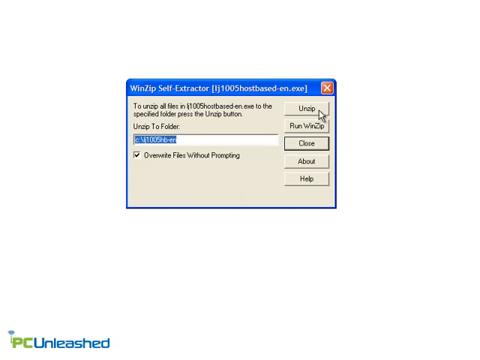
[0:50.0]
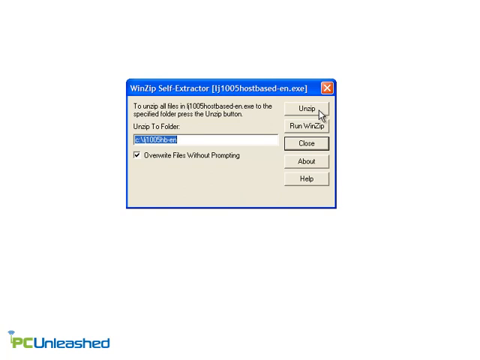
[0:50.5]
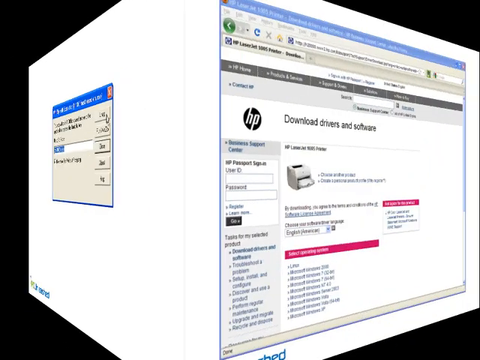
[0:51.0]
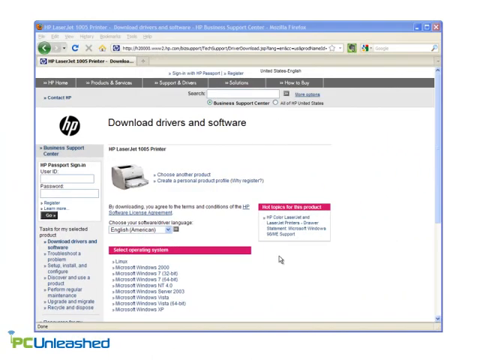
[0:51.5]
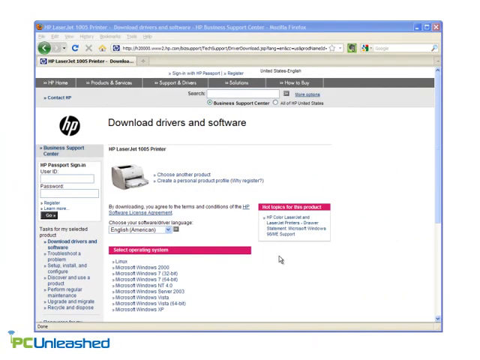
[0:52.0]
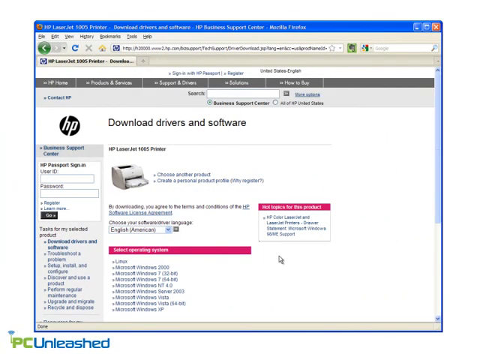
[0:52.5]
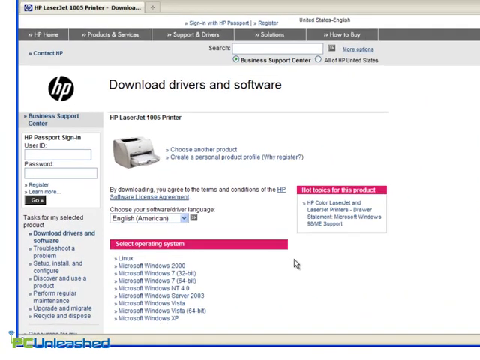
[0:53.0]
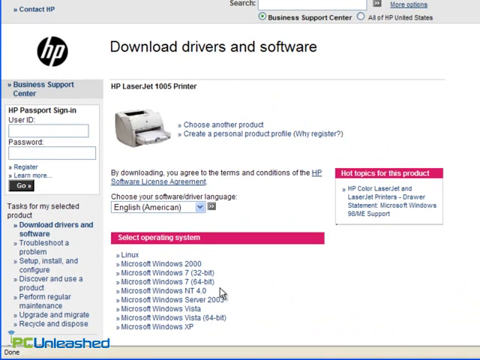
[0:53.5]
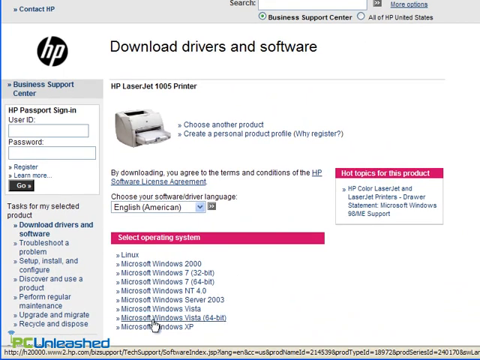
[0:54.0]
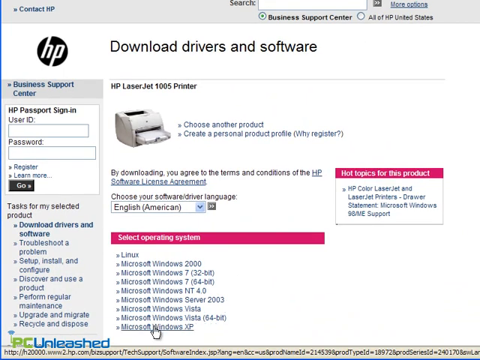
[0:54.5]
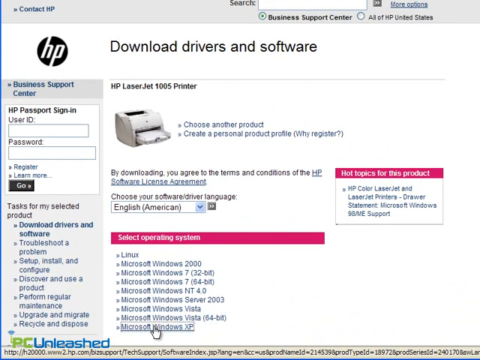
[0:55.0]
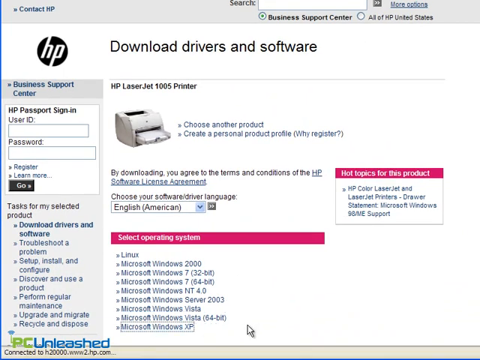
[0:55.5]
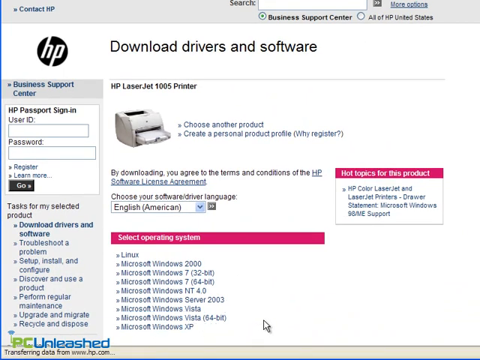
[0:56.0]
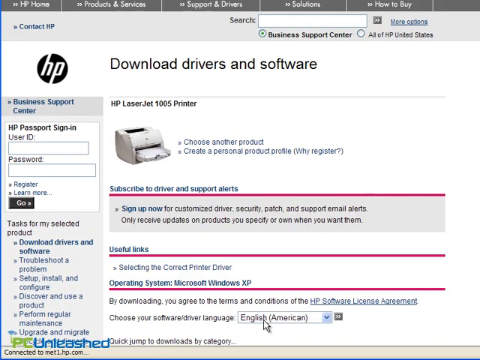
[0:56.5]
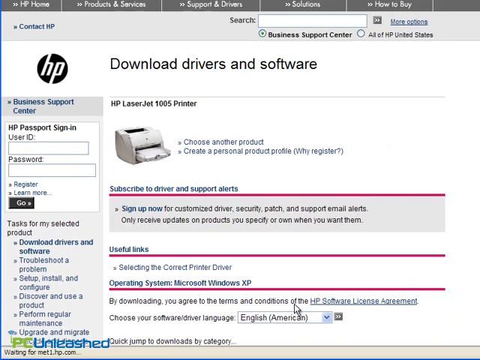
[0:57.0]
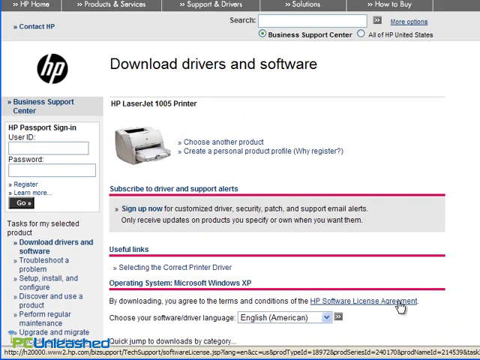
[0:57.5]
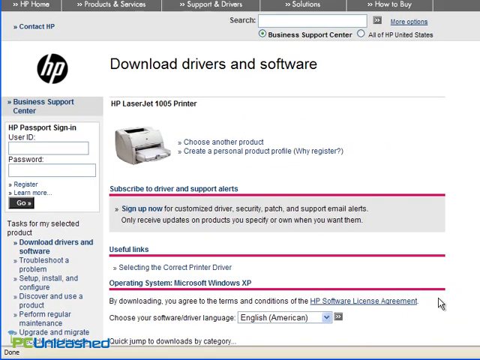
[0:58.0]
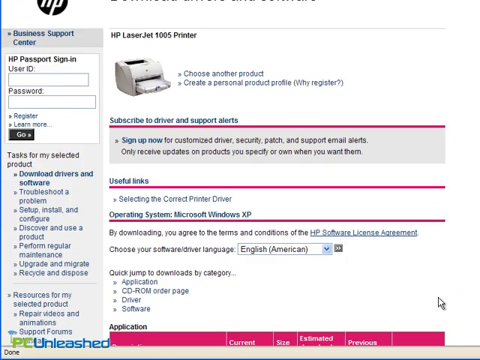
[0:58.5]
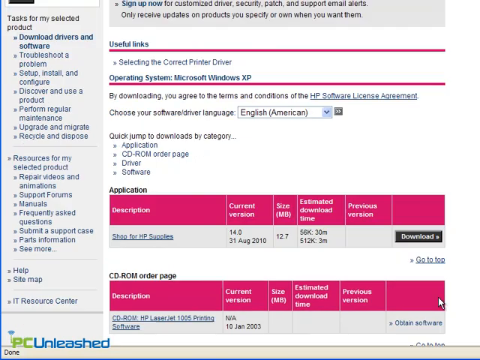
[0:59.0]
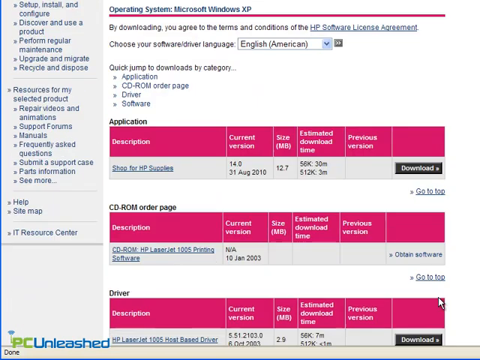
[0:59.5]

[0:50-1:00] The file is unzipped by clicking the unzip button, extracting to the folder shown in the bar below. A browser then opens to the HP site, where the Microsoft Windows XP driver is selected and download is clicked. The HP software license agreement page appears and redirects to the site. The HP site also lists drivers for other systems, such as Linux, Microsoft Windows 2000, Microsoft Windows 7 in 64-bit and 32-bit versions, Microsoft Windows NT4, Server 2003, Microsoft Vista and others. There are also options to sign in with a user ID and password and to contact HP.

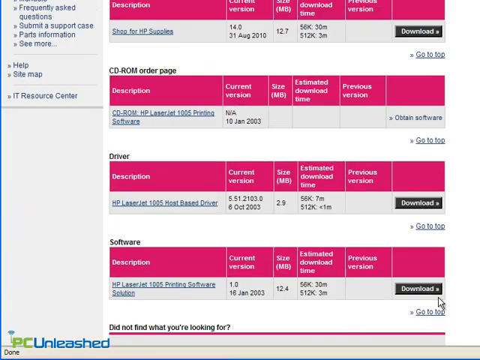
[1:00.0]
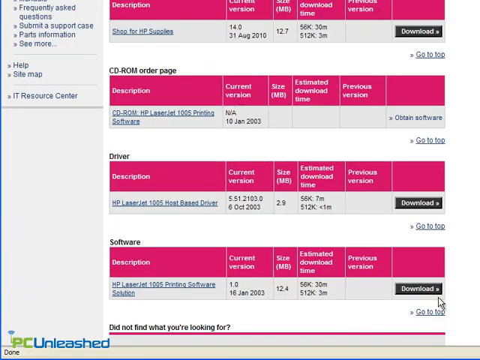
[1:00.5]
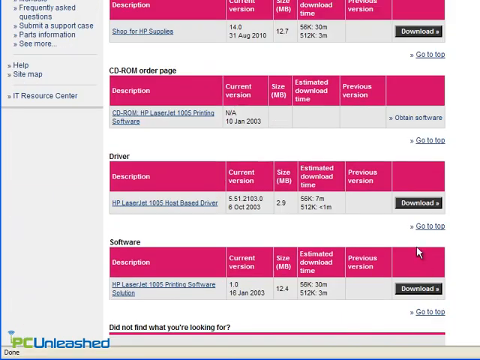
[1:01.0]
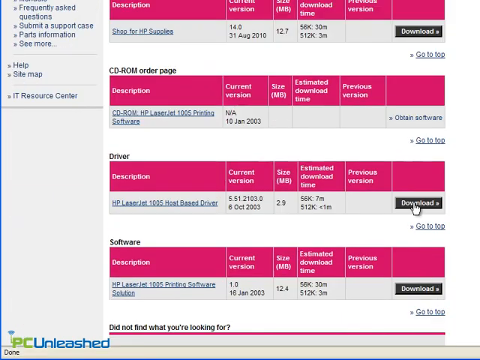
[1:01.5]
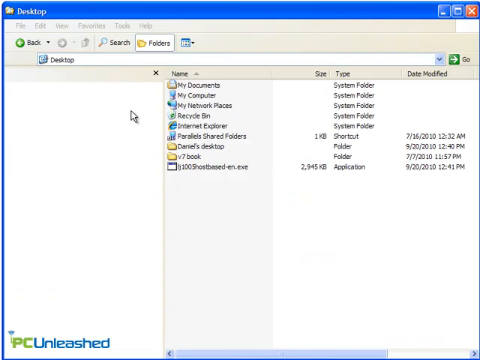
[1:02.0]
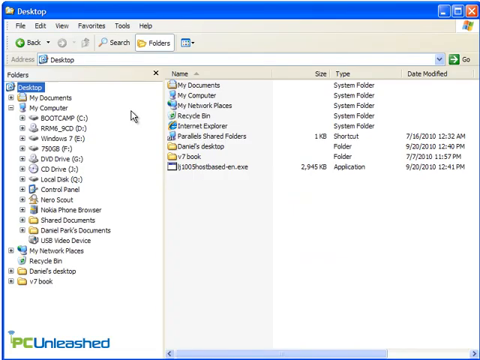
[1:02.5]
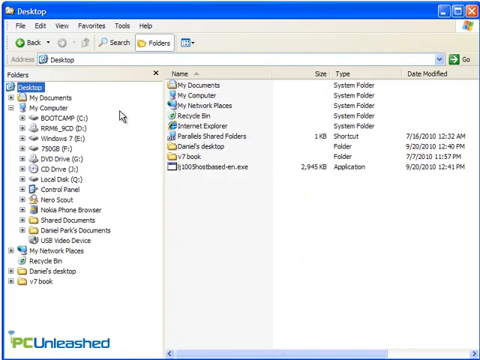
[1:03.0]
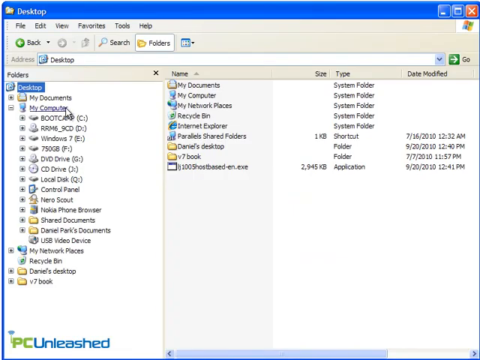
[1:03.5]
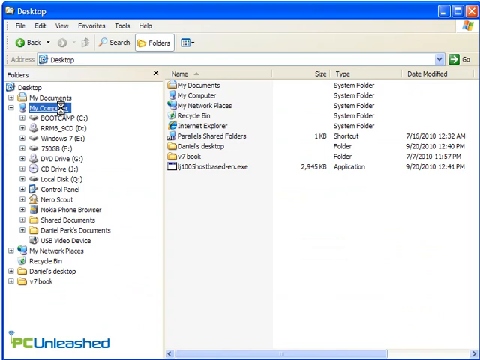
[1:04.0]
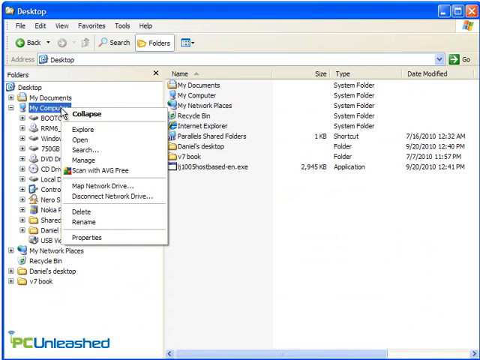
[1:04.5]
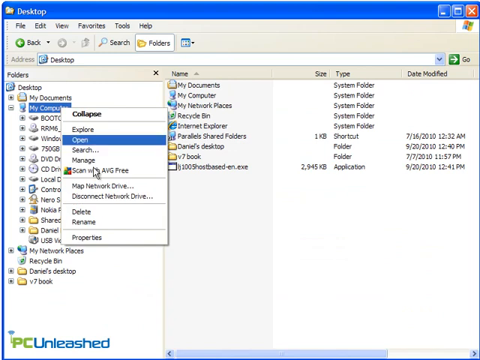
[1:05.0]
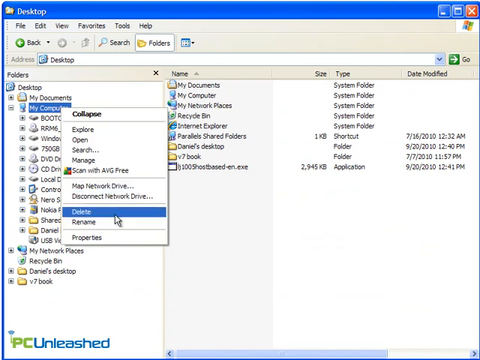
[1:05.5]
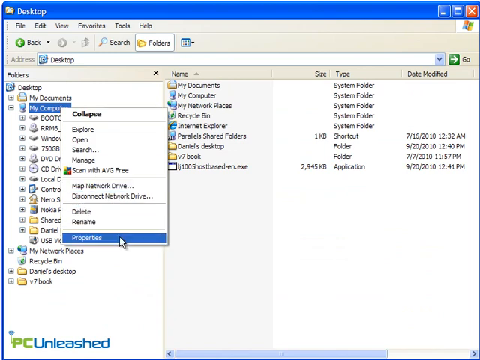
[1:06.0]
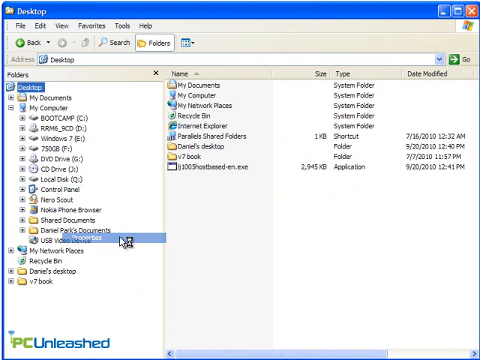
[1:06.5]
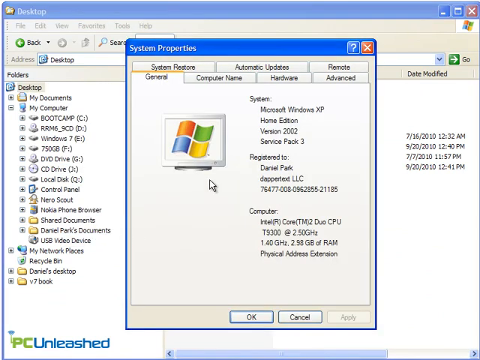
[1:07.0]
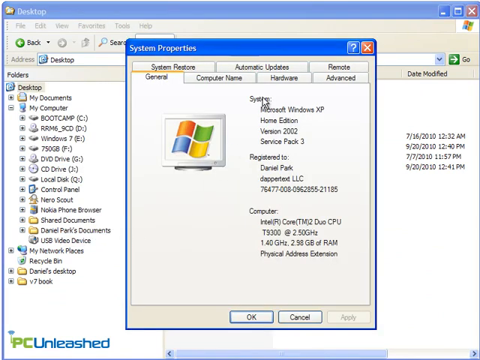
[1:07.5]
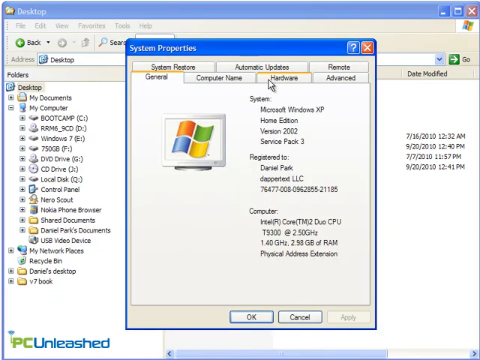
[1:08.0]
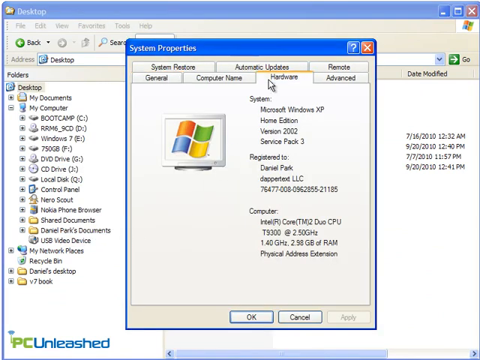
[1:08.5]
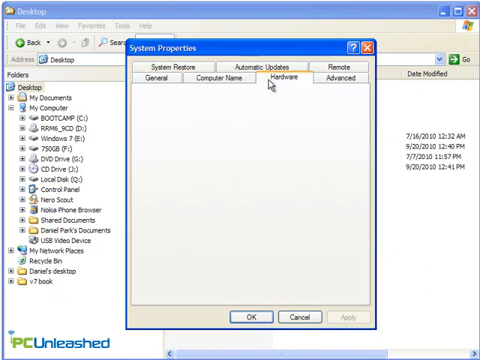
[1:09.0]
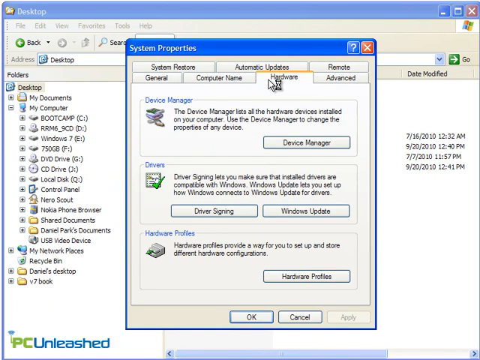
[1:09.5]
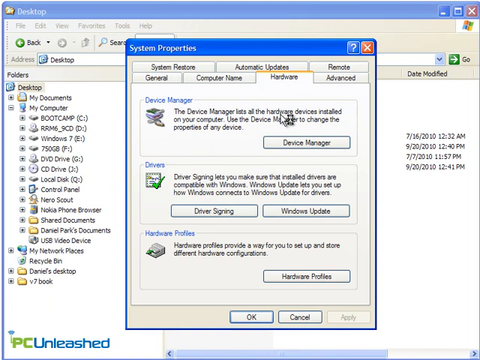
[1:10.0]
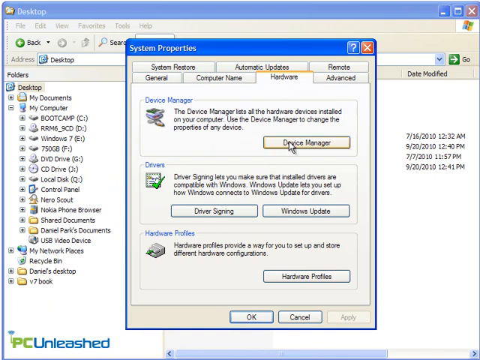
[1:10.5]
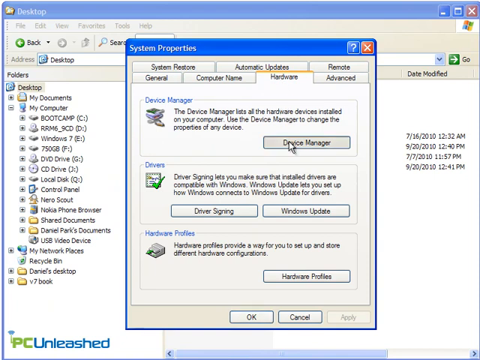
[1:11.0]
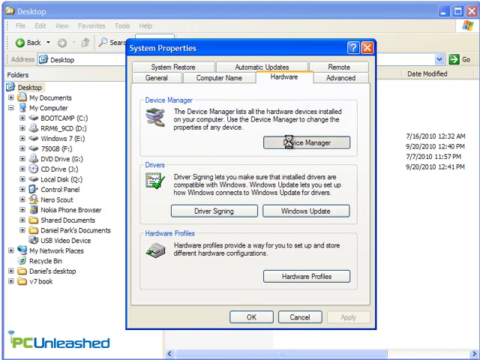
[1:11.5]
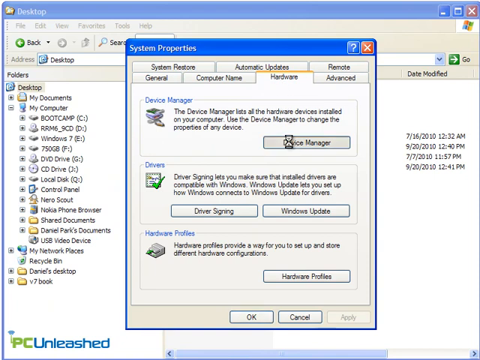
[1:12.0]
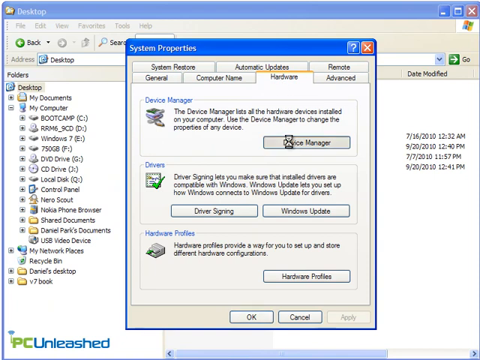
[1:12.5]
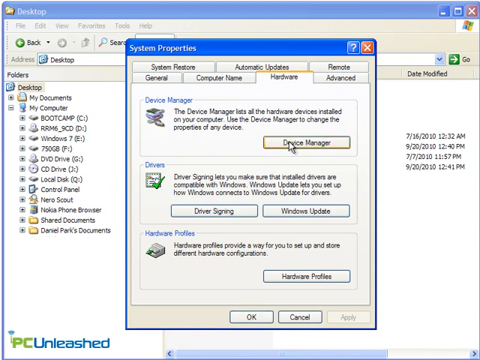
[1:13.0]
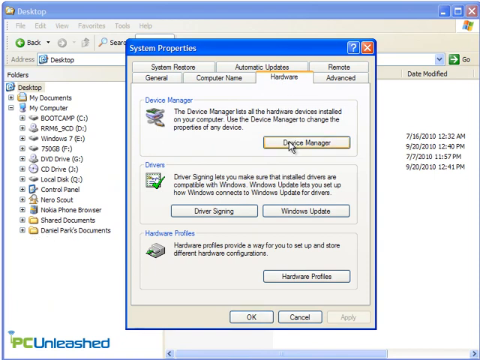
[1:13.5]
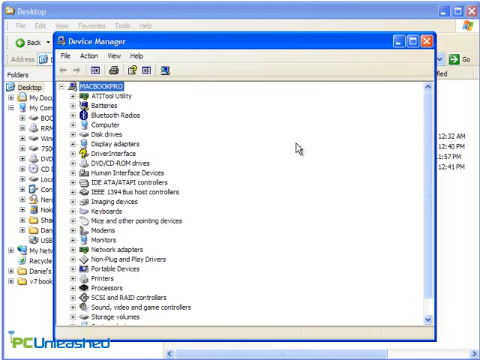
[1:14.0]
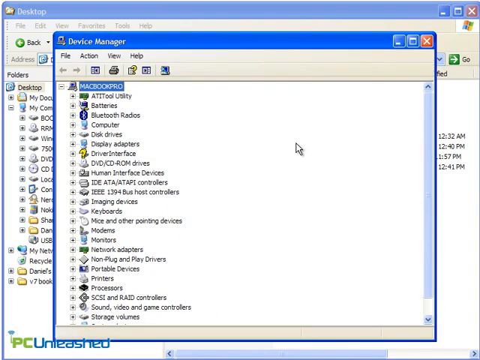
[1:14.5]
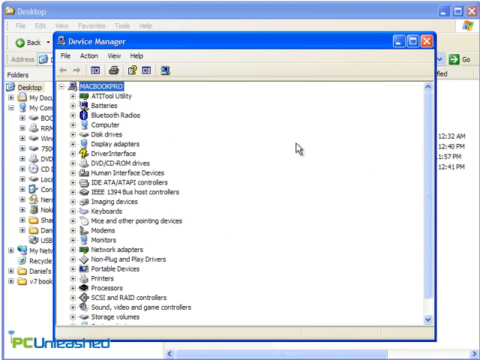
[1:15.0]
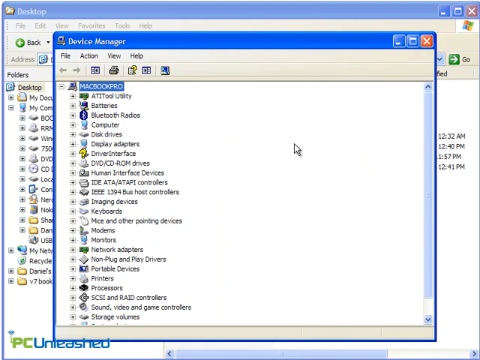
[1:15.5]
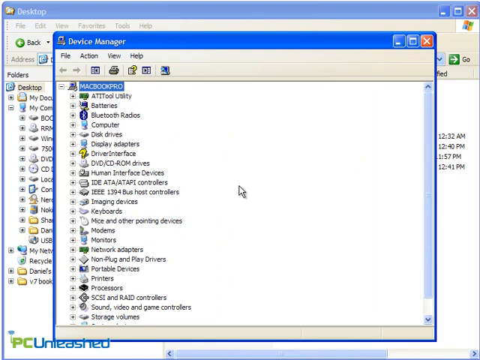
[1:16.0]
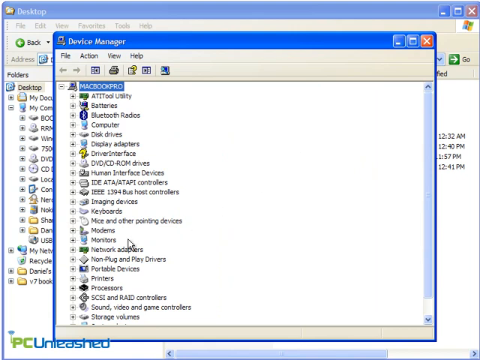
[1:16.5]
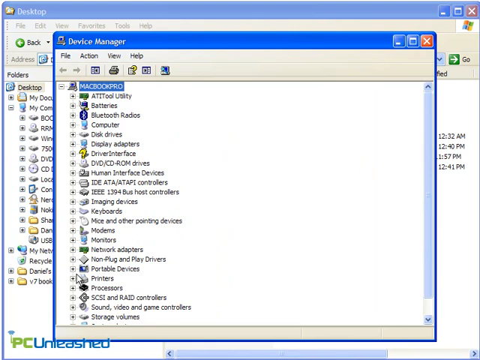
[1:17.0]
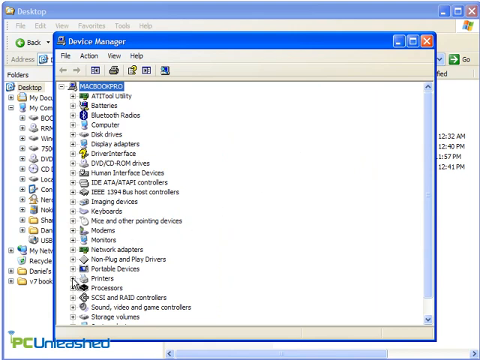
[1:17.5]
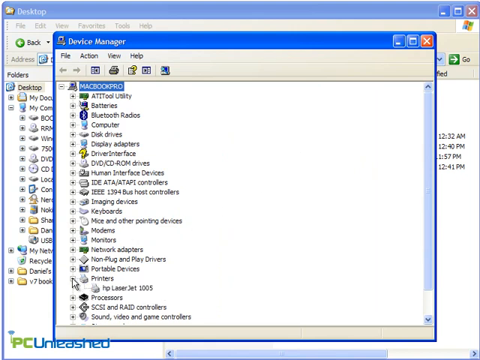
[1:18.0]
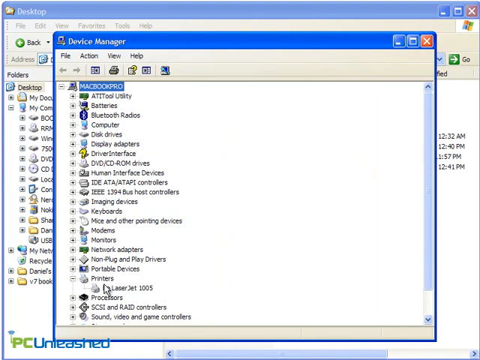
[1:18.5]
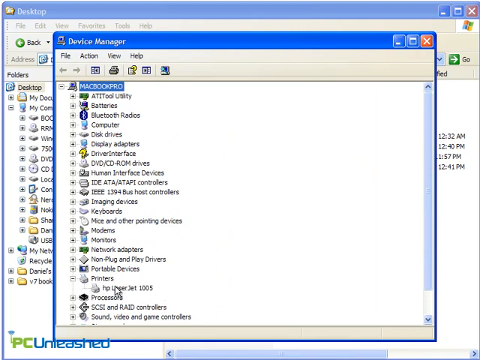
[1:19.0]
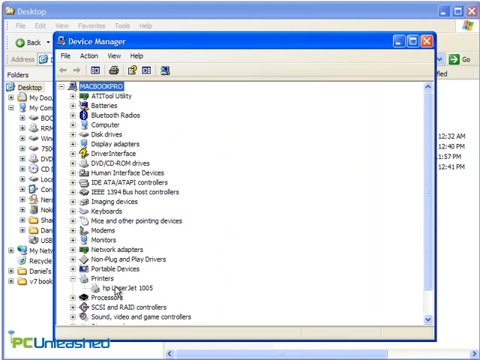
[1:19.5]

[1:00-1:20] A website shows items such as CD-ROM, other pages and driver software. Software for a printer, the HP LaserJet host-based driver, is offered at a size of 2.9 megabytes, and download is clicked. The desktop is selected, My Computer is right-clicked, and Properties is chosen. In the Hardware tab, Device Manager is clicked, opening a list of categories such as computing devices, modems and monitors. Printers is selected, and the HP LaserJet 1005 is clicked.